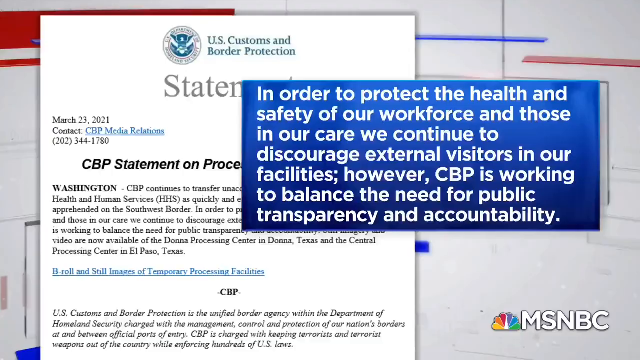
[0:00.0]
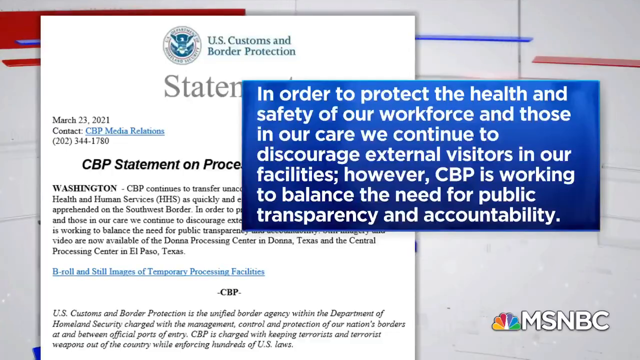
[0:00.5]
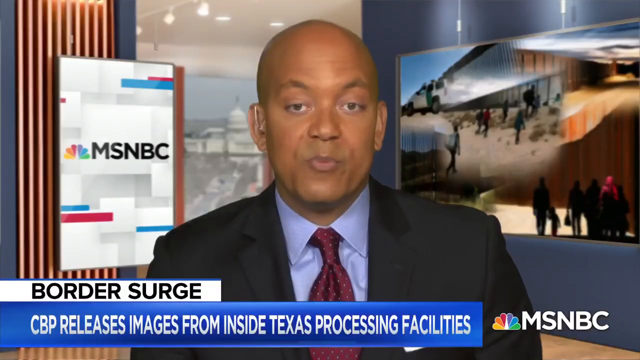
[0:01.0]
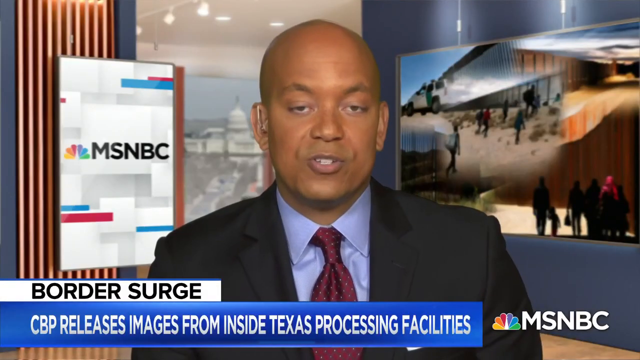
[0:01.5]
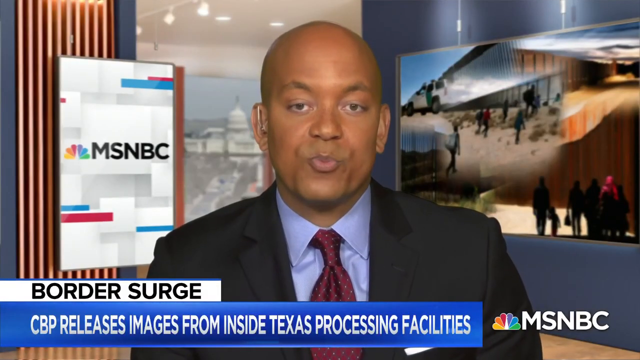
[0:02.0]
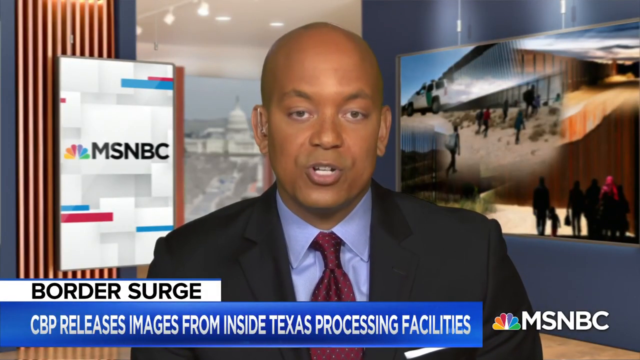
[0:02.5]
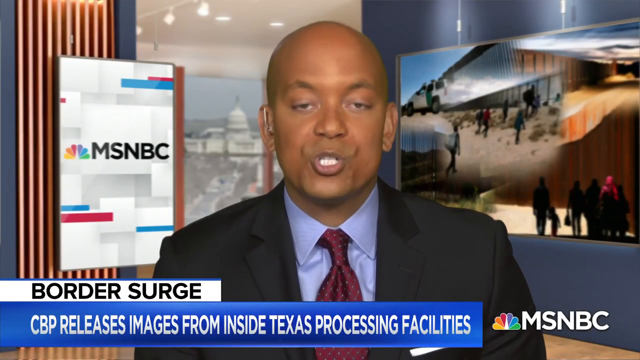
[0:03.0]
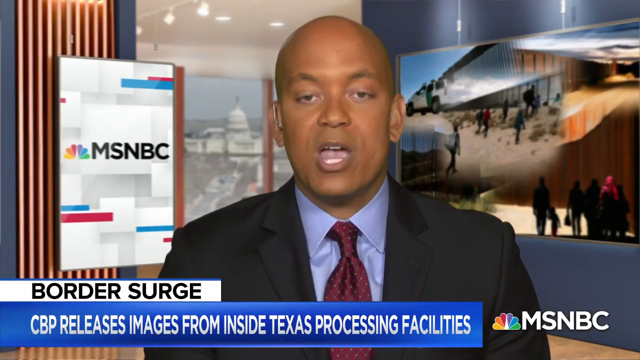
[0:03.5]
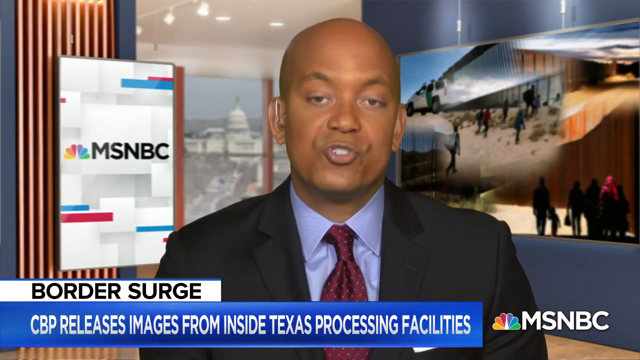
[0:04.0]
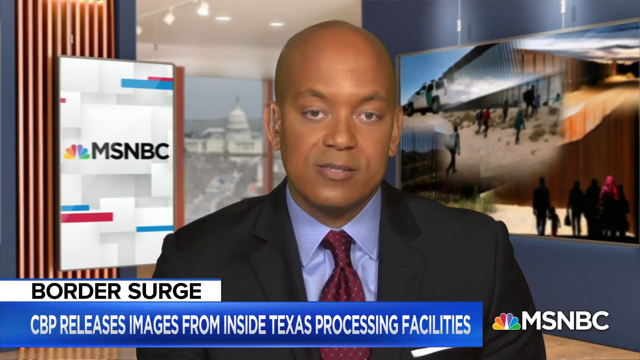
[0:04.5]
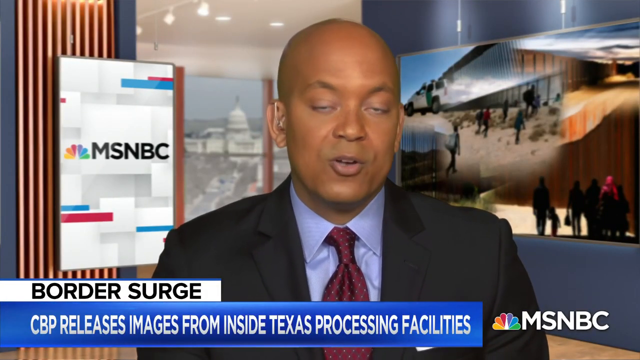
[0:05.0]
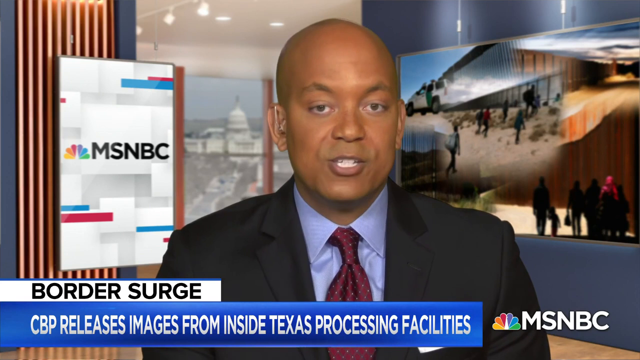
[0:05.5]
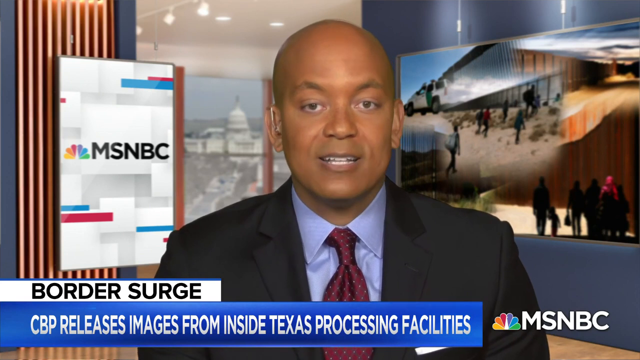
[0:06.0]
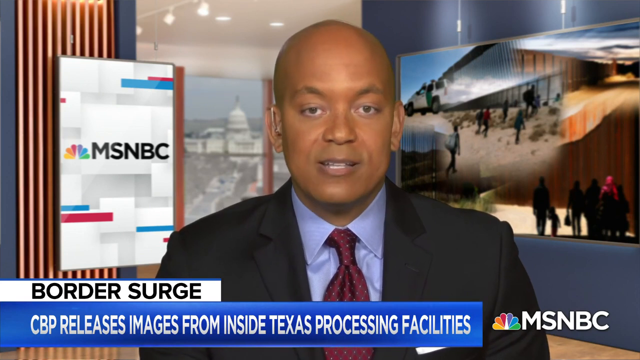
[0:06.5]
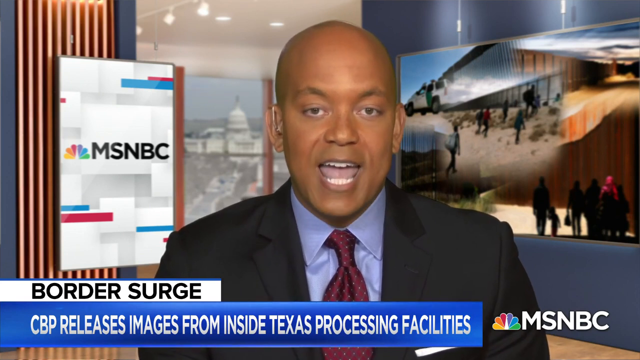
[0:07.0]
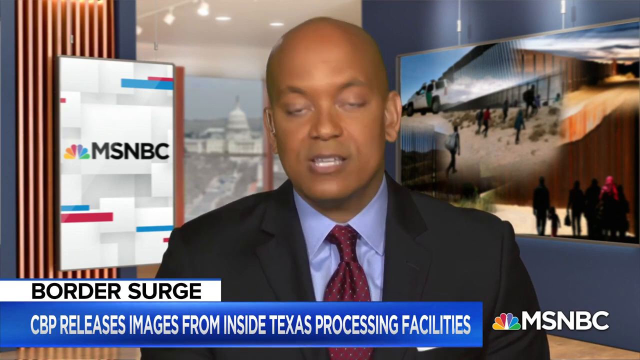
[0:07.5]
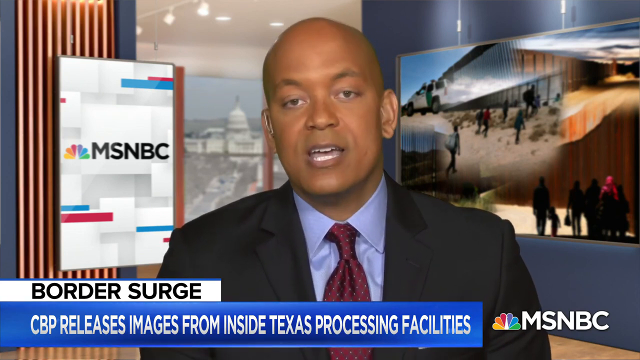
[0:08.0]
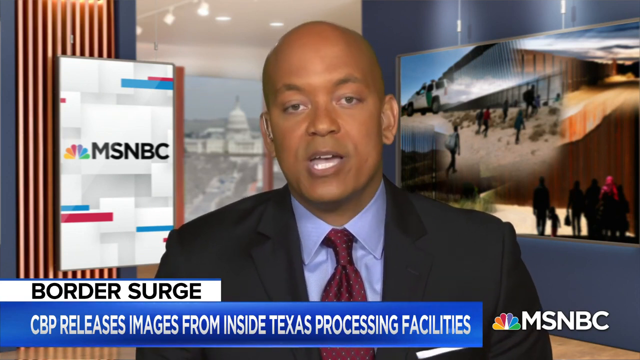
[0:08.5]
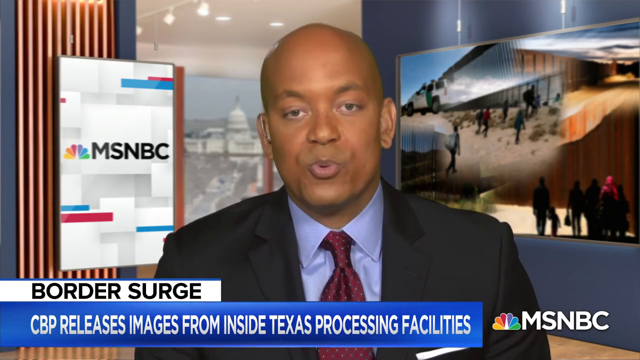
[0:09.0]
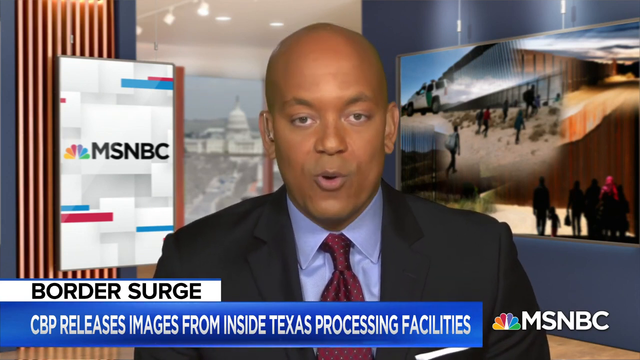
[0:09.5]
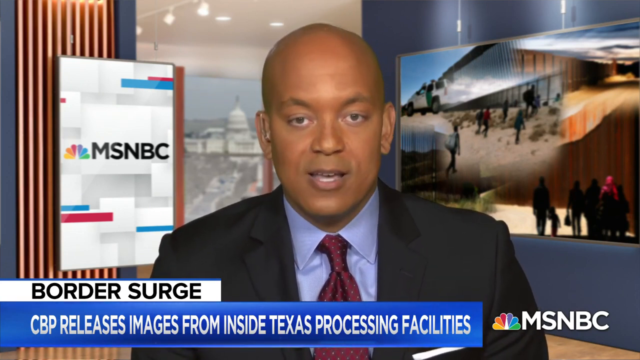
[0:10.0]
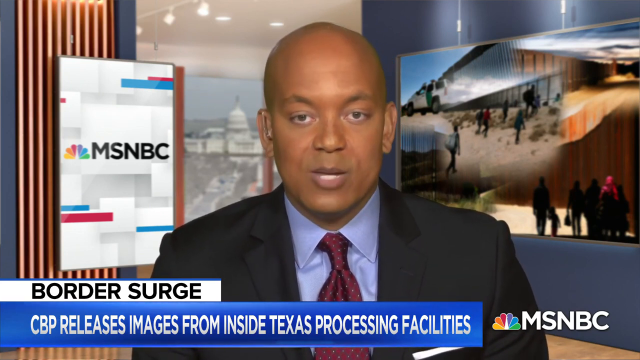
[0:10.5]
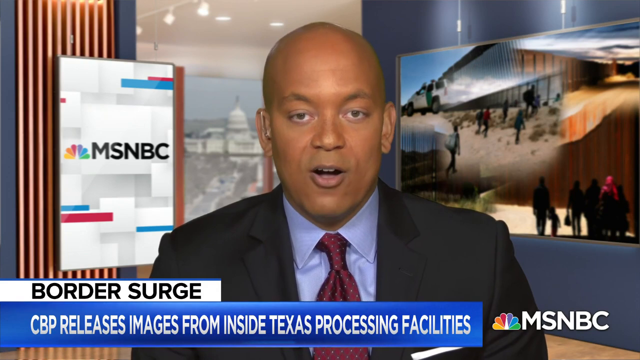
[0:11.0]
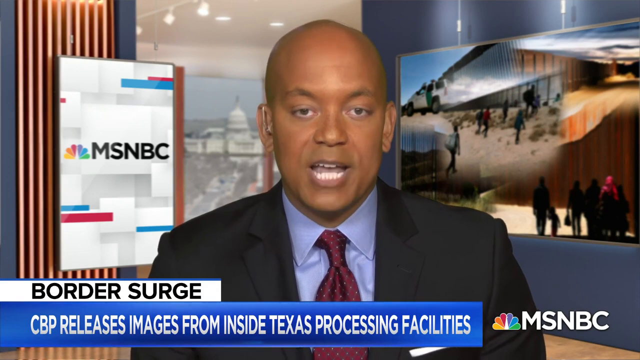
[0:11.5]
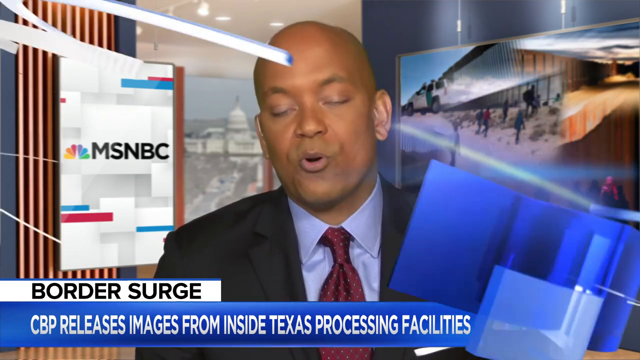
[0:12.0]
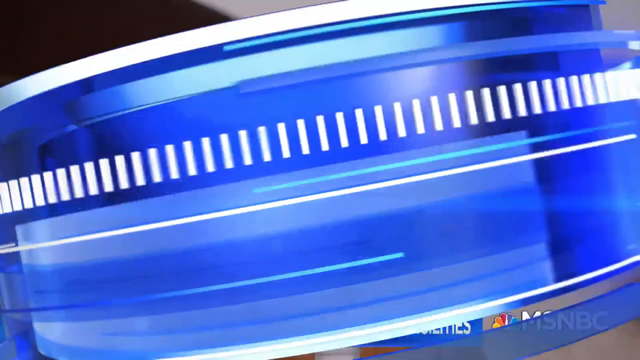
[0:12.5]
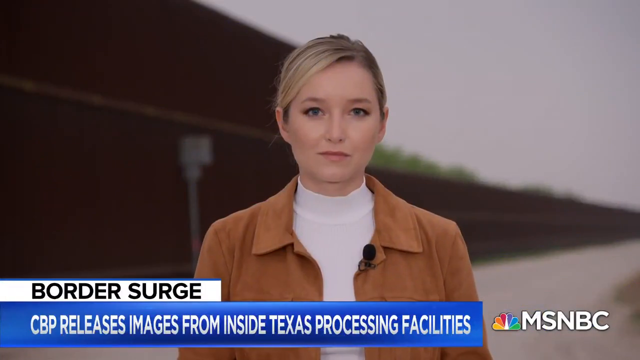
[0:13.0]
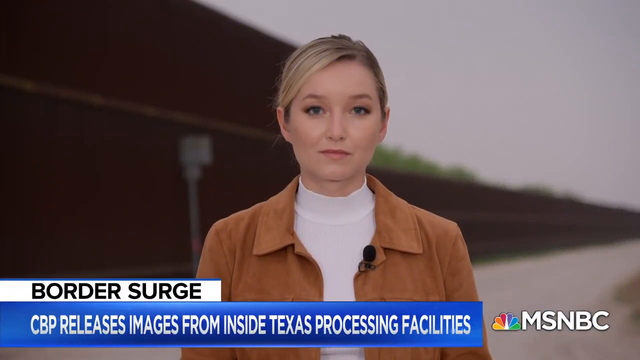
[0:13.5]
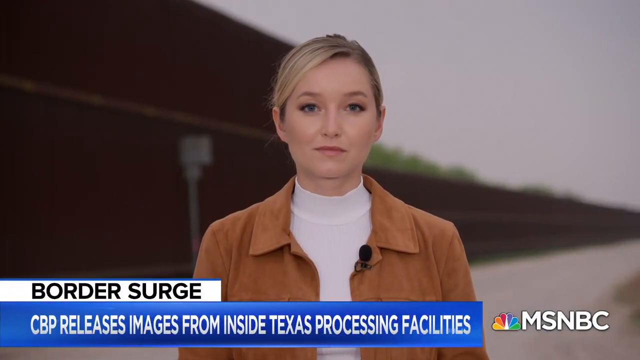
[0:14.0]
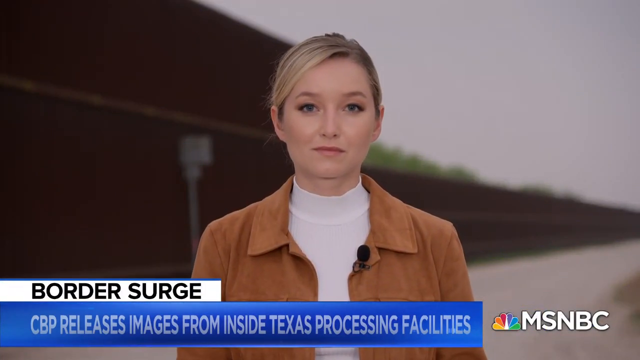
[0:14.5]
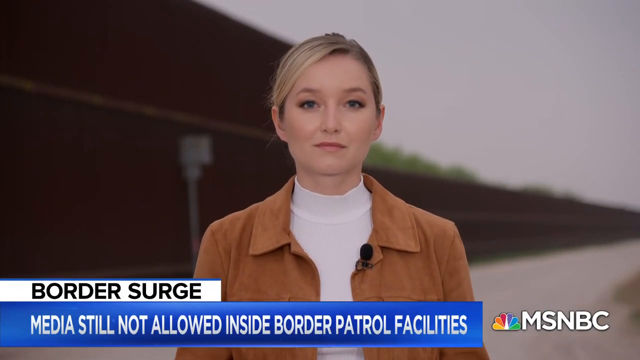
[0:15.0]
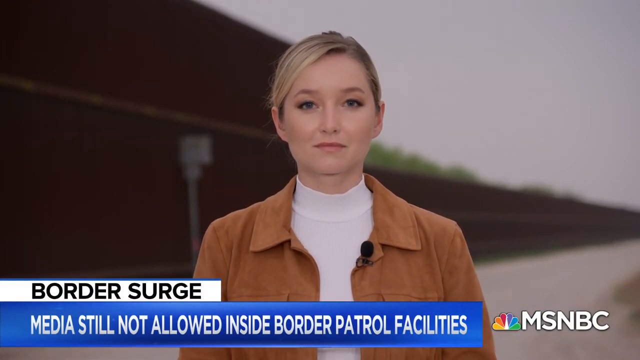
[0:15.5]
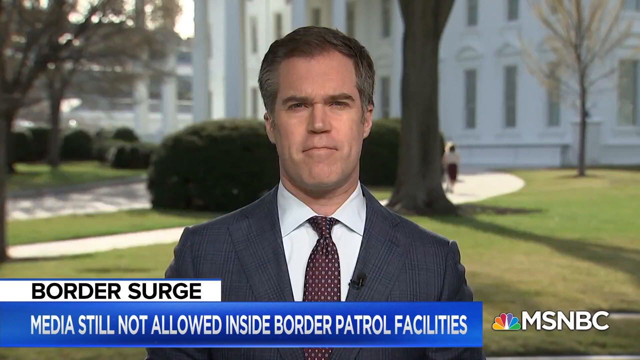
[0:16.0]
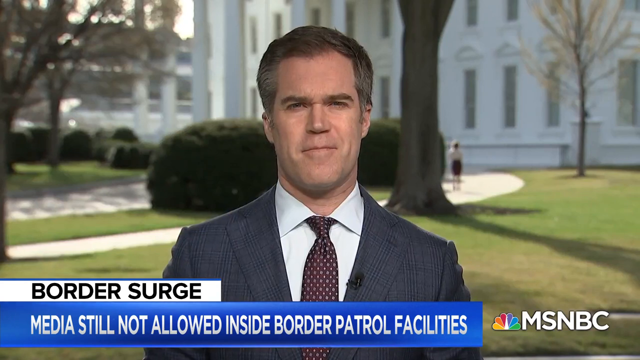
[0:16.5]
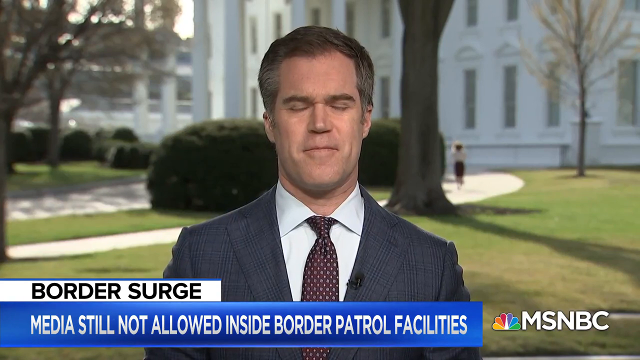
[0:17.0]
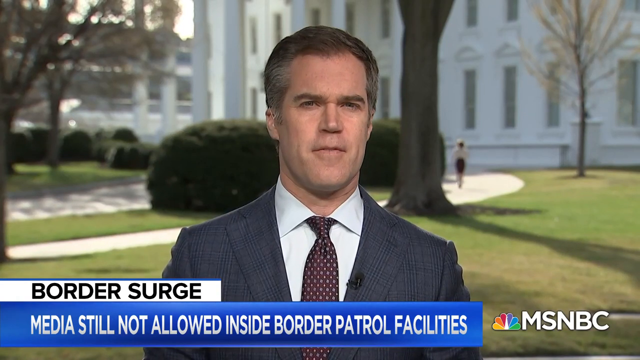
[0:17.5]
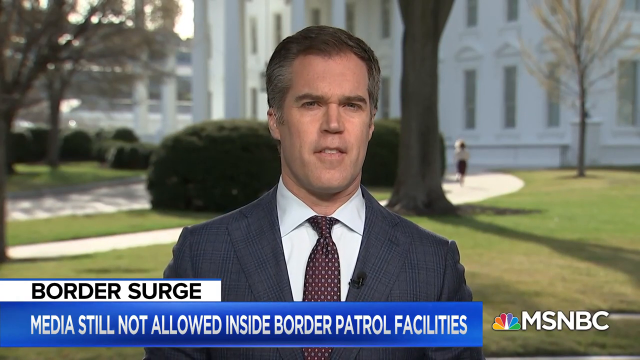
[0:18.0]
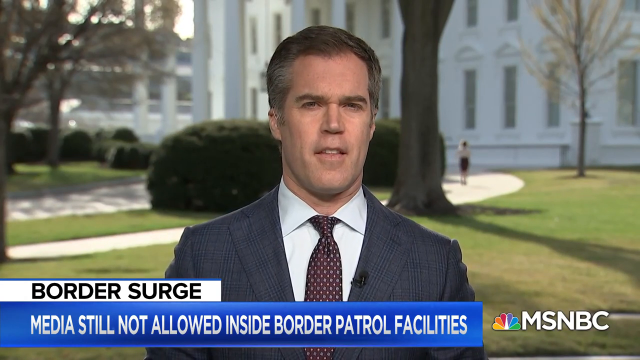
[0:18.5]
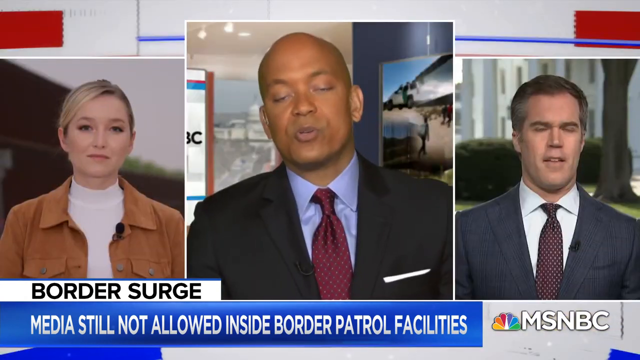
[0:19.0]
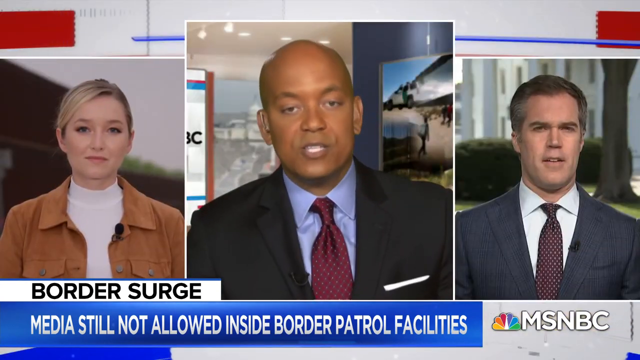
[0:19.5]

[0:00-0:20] The video opens on what looks like an 8.5-by-11 piece of paper on the left side. At the top it reads "U.S. Customs and Border Protection," and underneath, in a large gray font, it reads "statement," followed by what looks like black text about border protection. On the right is a blue rectangle with white text that begins: "in order to protect the health and safety of our workforce and those in our care, we continue to discourage external visitors in our facilities." The video then transitions to a man in a blue shirt. To his left is an MSNBC visual element with the NBC logo on its left, and to his right is a TV showing some video. He speaks into the camera, at one point shaking his head slightly back and forth, and occasionally nodding slightly up and down as he talks. The video then transitions to two reporters who appear to be on the scene: one appears to be in front of the White House, and the other, a woman, is hard to make out but appears to be outside at some type of venue.